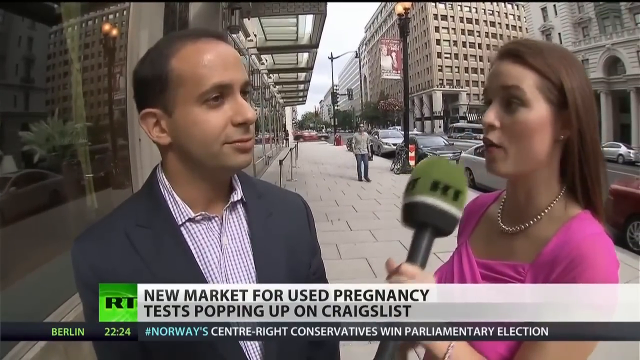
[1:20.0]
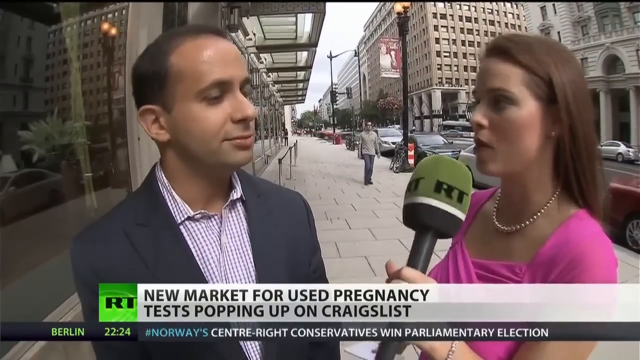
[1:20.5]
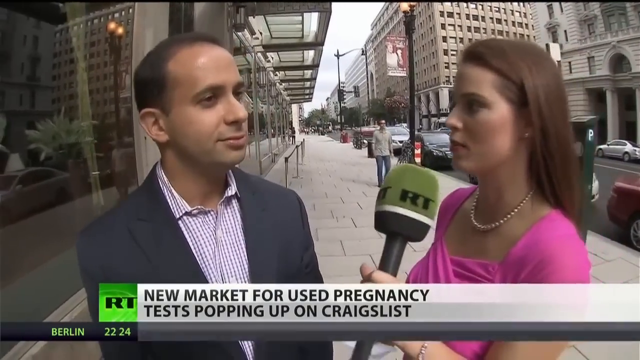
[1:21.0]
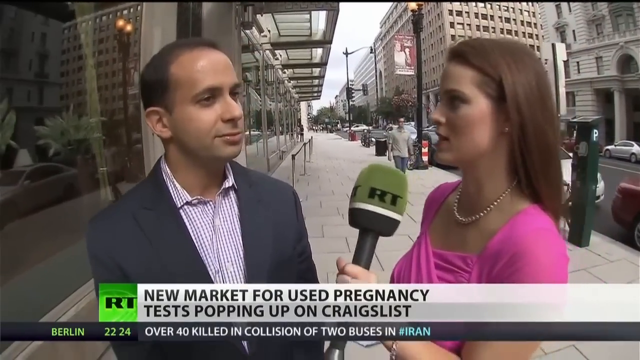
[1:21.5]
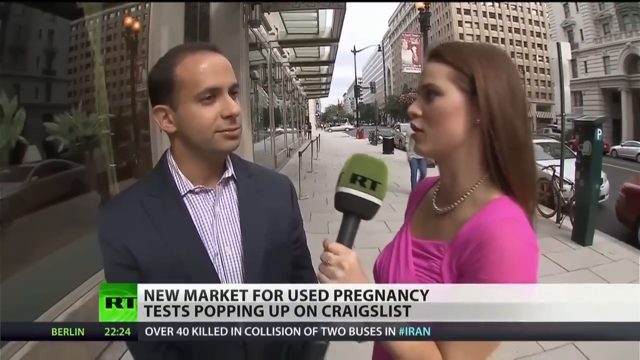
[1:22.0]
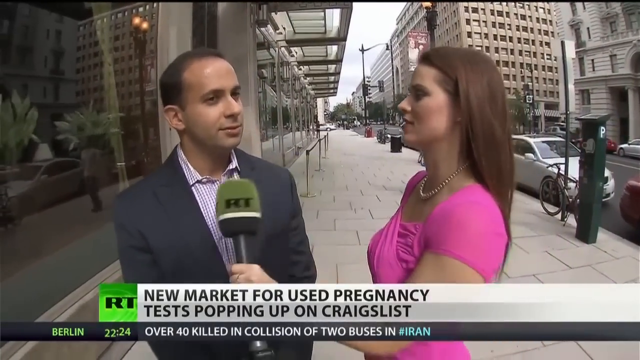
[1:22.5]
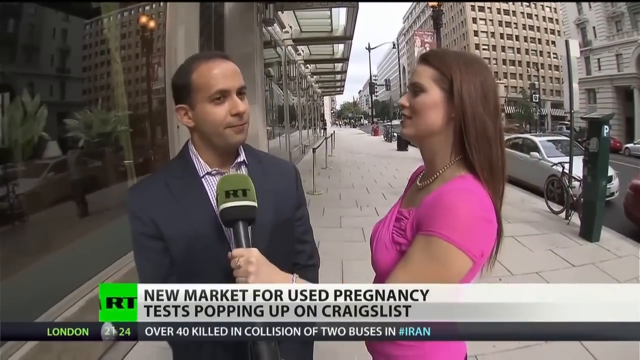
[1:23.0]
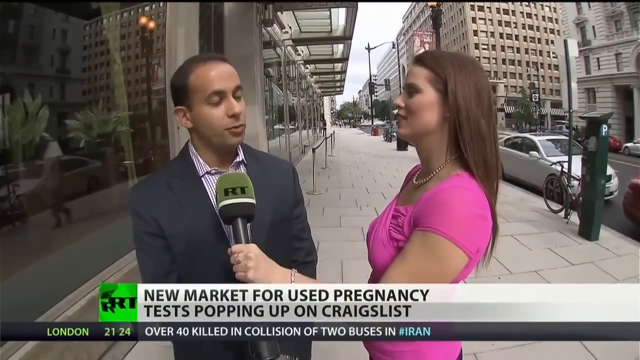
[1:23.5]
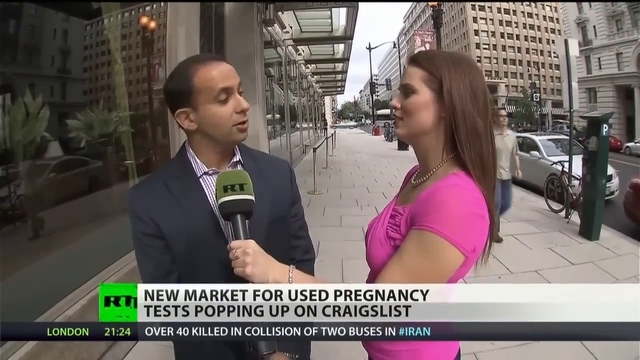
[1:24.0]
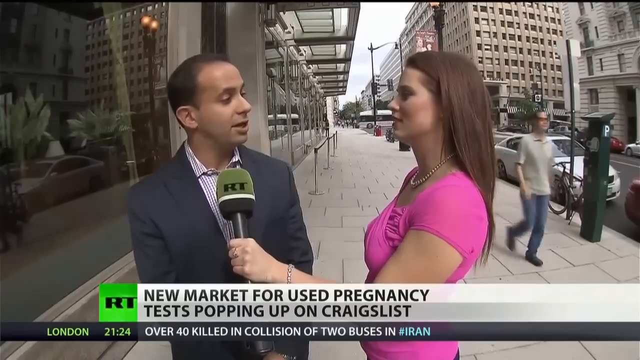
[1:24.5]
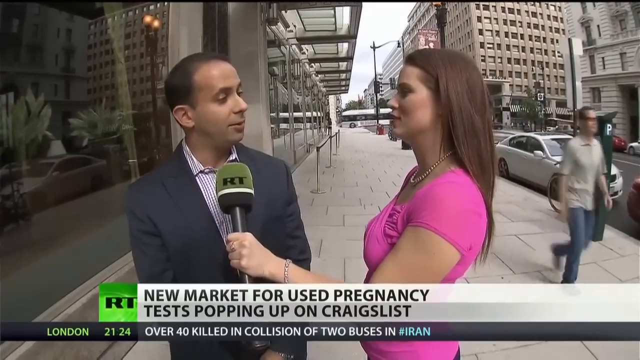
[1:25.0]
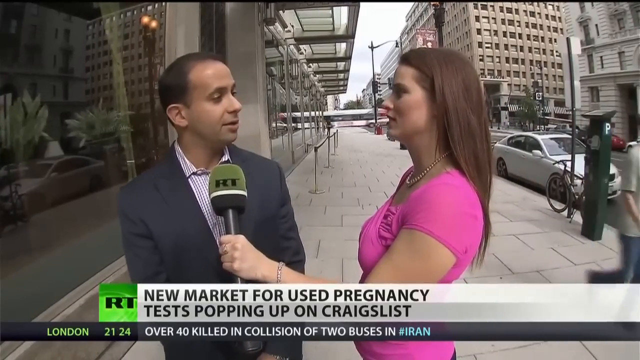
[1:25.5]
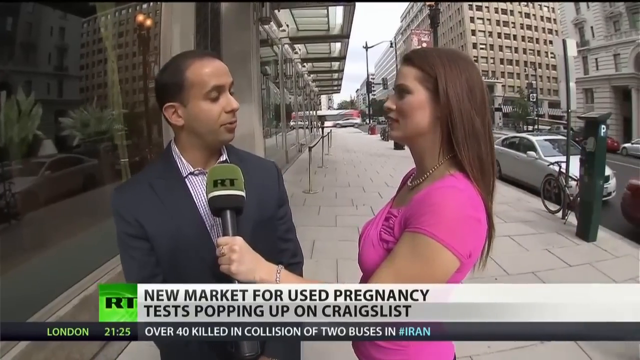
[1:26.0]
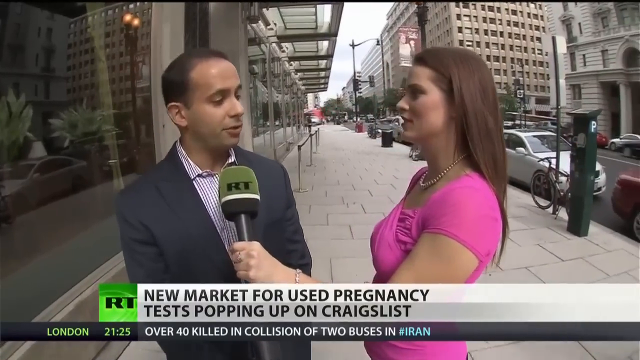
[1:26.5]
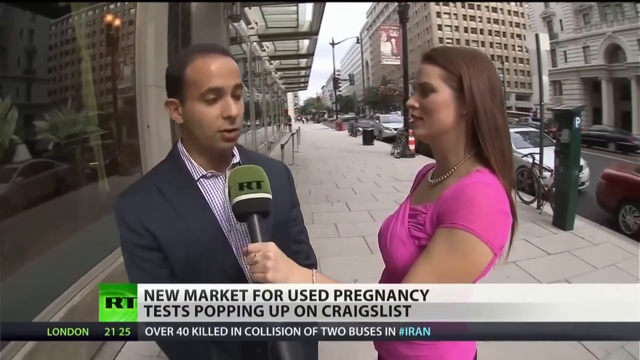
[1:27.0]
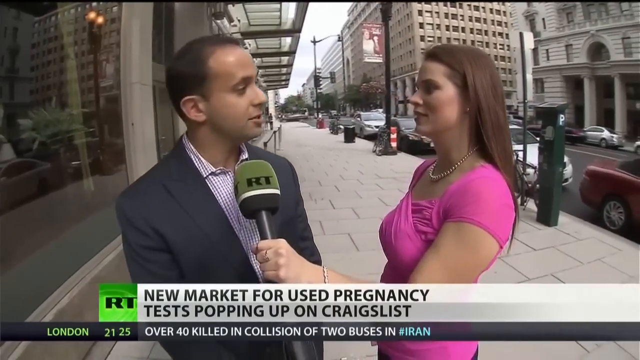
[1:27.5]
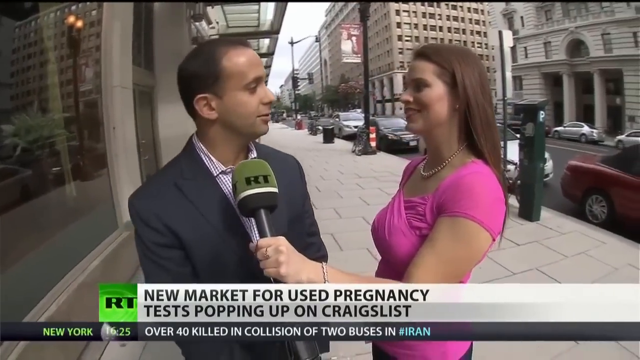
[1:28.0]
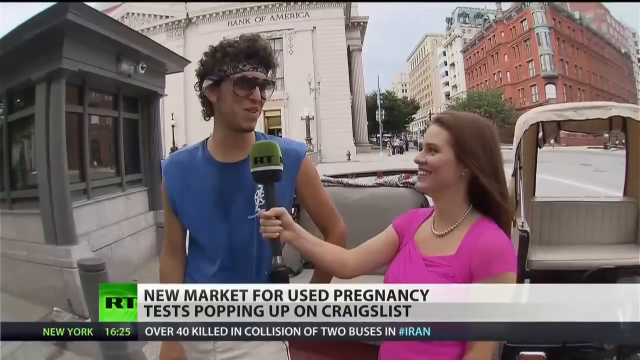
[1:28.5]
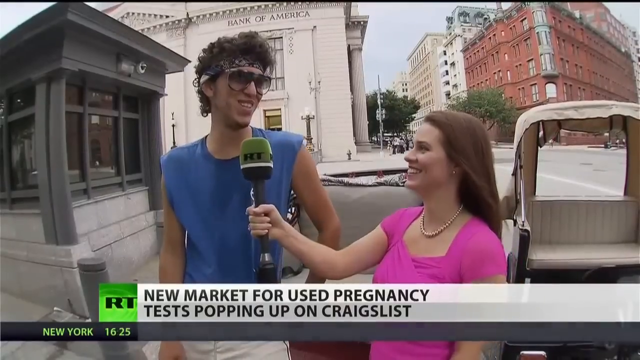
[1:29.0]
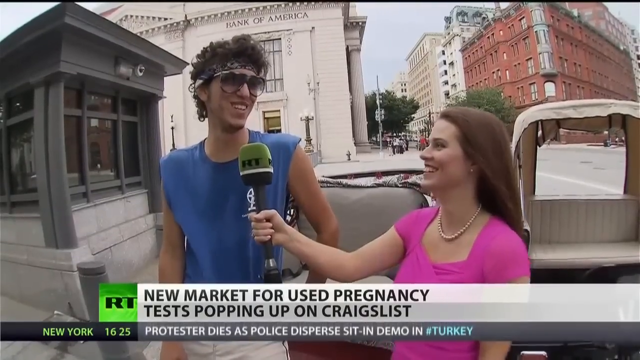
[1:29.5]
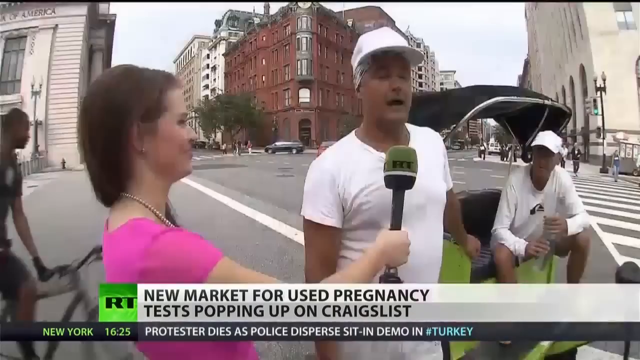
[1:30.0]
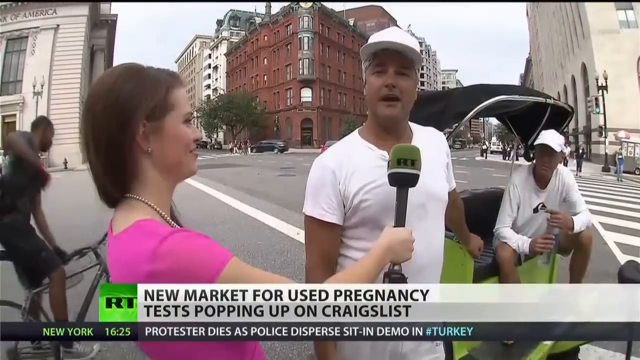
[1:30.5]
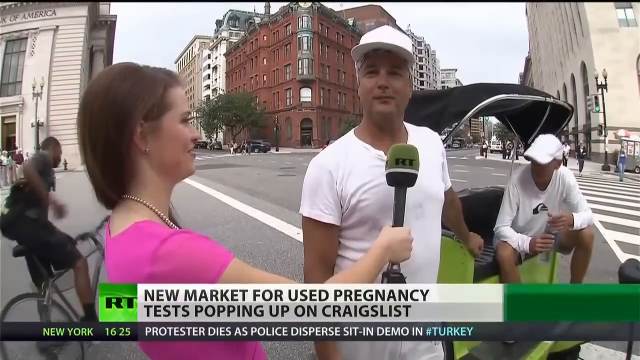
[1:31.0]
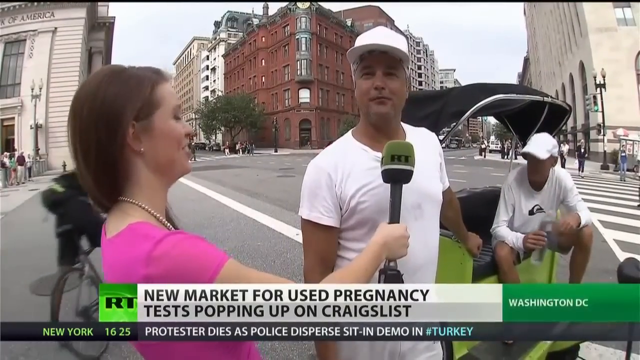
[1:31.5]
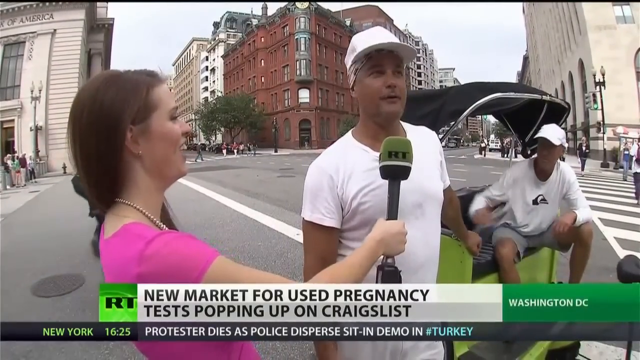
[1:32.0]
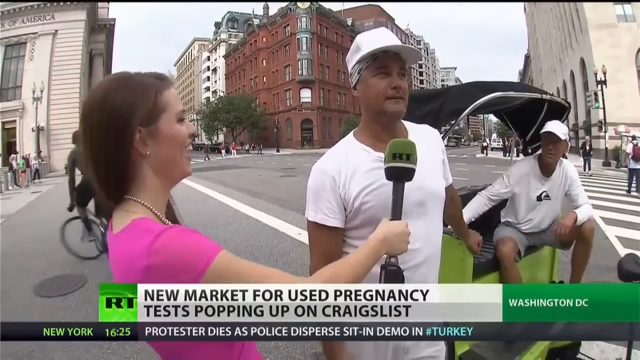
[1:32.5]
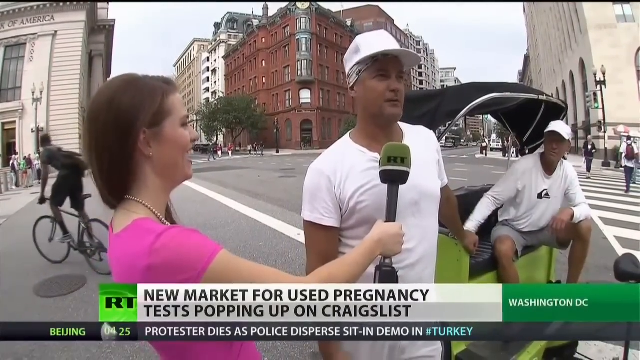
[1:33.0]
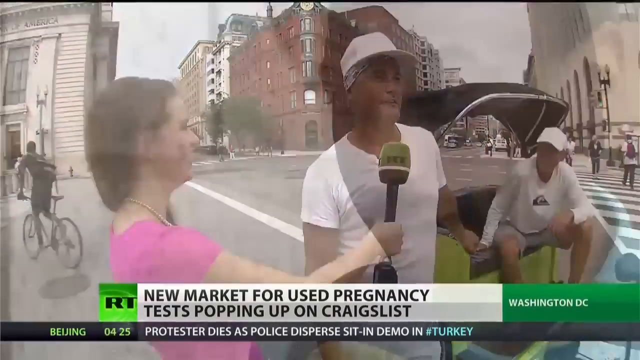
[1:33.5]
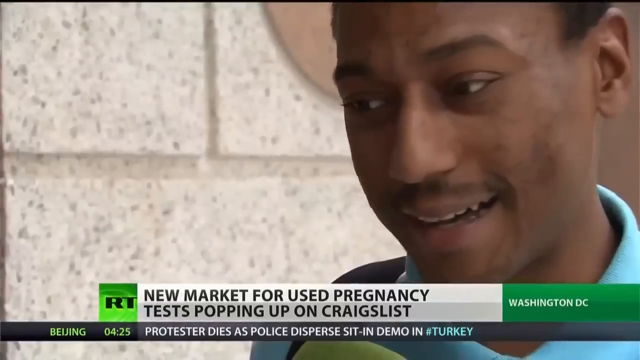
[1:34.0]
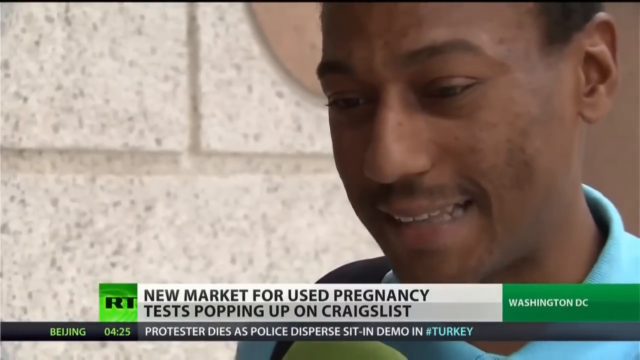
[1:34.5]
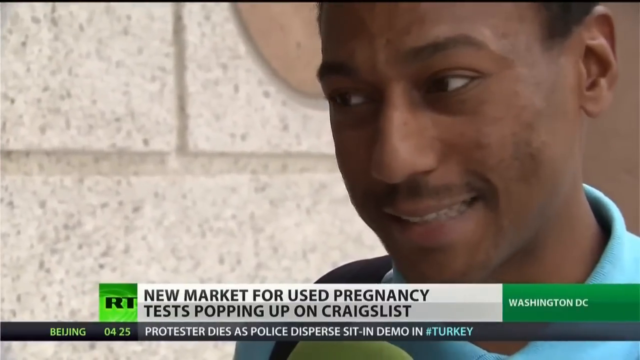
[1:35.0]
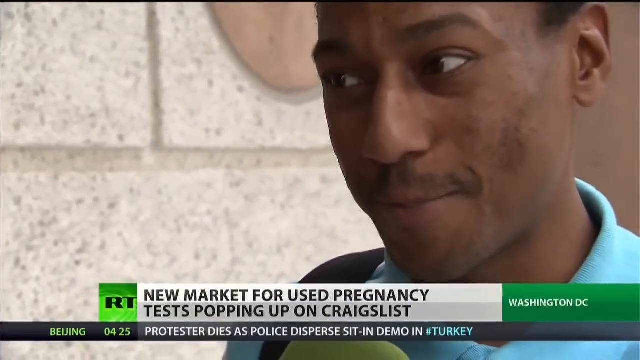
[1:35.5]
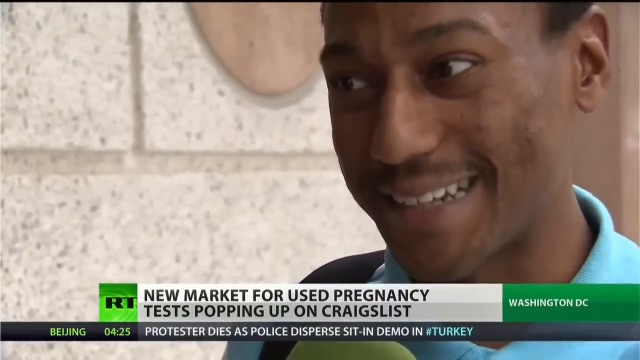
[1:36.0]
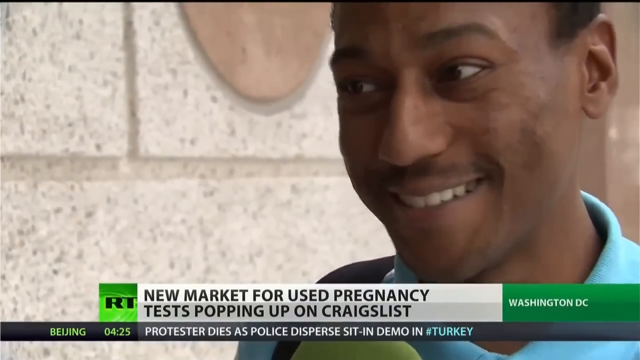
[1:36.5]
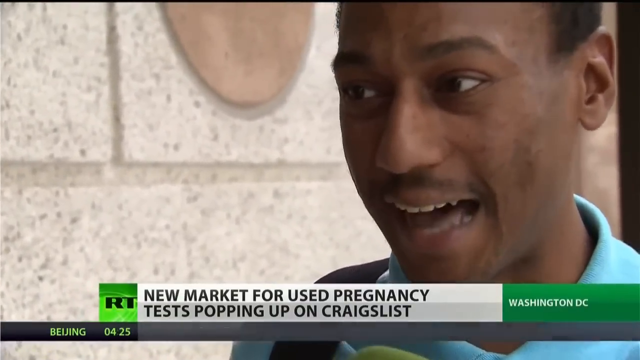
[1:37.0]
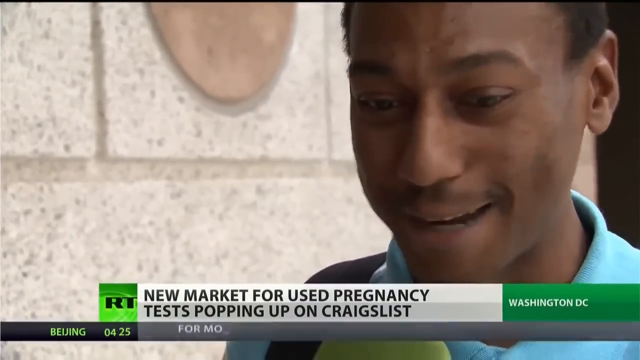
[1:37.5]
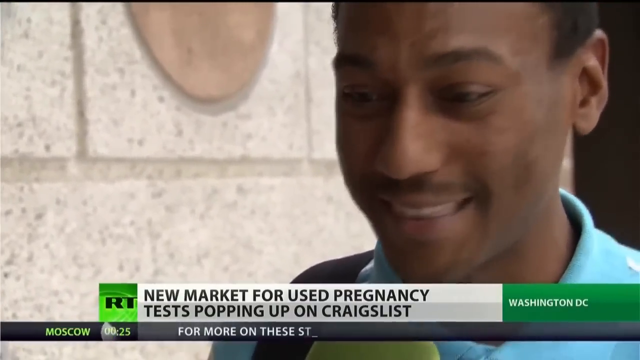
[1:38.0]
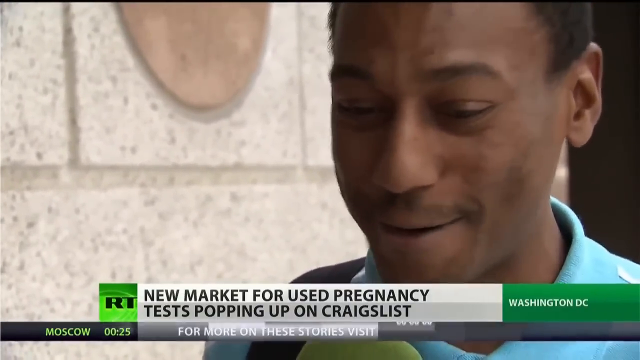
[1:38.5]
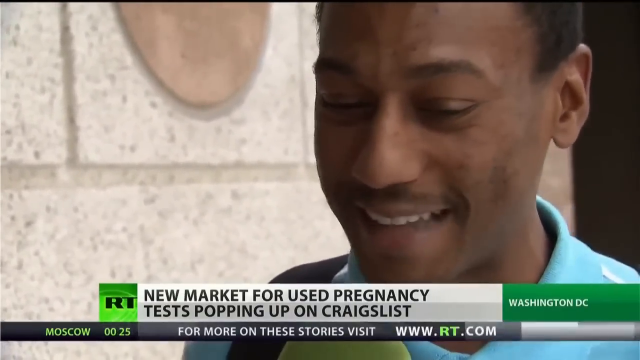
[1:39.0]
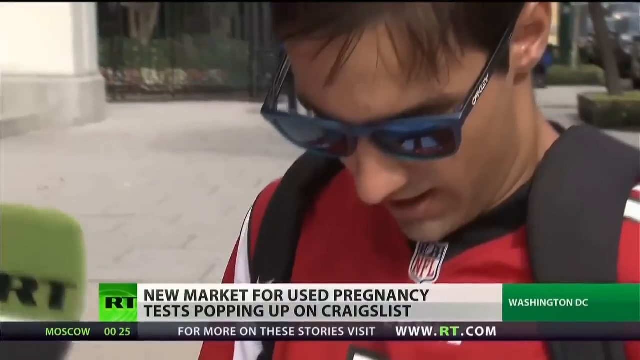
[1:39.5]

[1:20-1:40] A woman in a pink shirt stands on the street to the right, holding a microphone with the RT logo on its side. She talks to a man to her left, eventually puts the microphone in front of him, and he begins talking, apparently answering her question. Text at the bottom of the screen reads "New market for used pregnancy tests popping up on Craigslist." Next she stands on the right with a man on the left in a blue shirt and sunglasses, holding the microphone in front of him as he talks. She then talks to two men; she is on the left and they are to her right, both wearing white shirts and white hats. A close-up follows of a man talking, looking forward, seemingly giving her an answer. She is interviewing several different people in a downtown area that looks like New York. The ticker at the bottom reads "Norway's center-right conservatives win parliamentary election," then "over 40 killed in a collision of two buses in Iran," then "protestor dies as police disperse sit-in demo in Turkey," and finally "for more on these stories, visit www.rt.com."